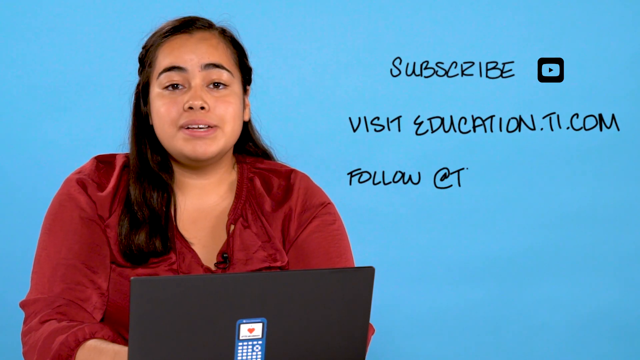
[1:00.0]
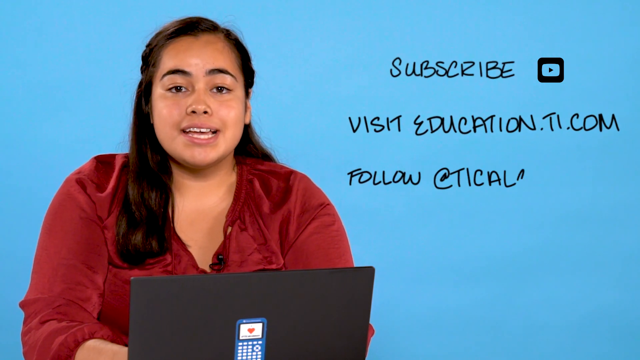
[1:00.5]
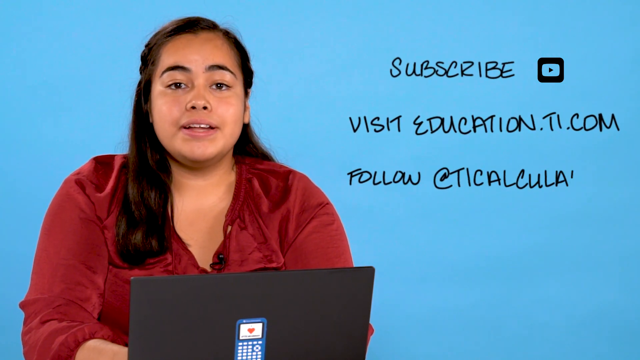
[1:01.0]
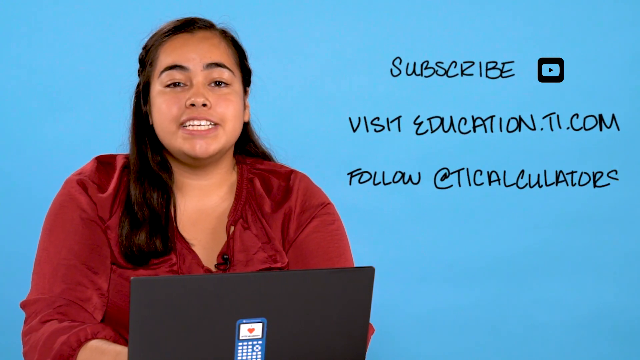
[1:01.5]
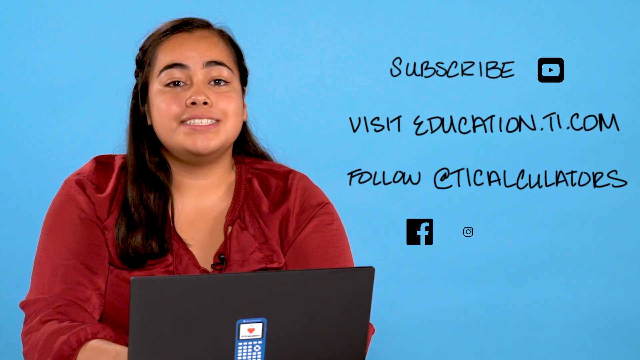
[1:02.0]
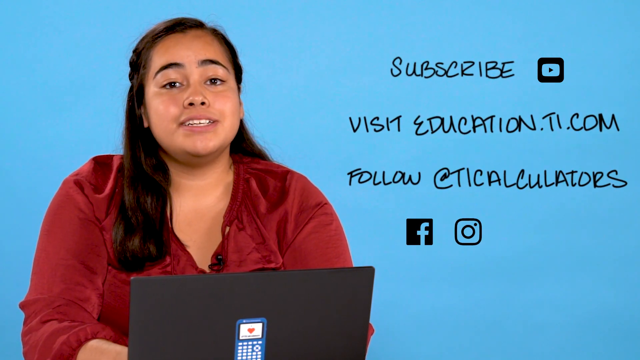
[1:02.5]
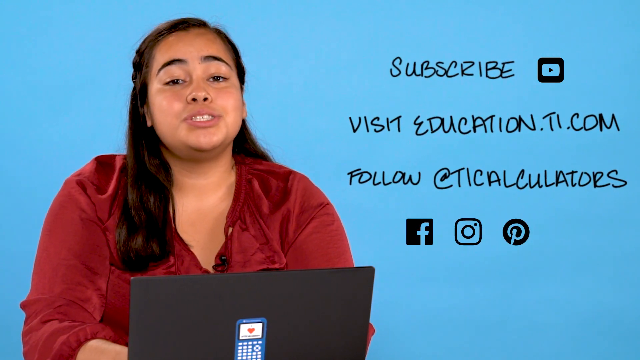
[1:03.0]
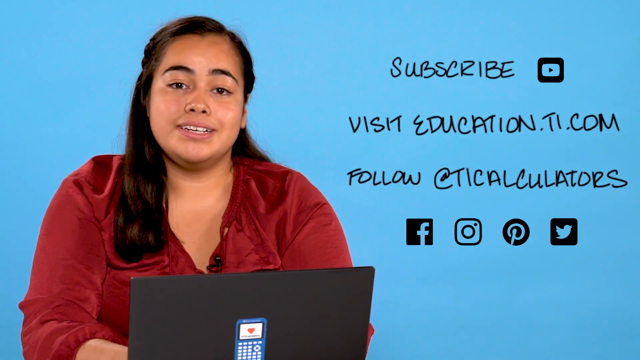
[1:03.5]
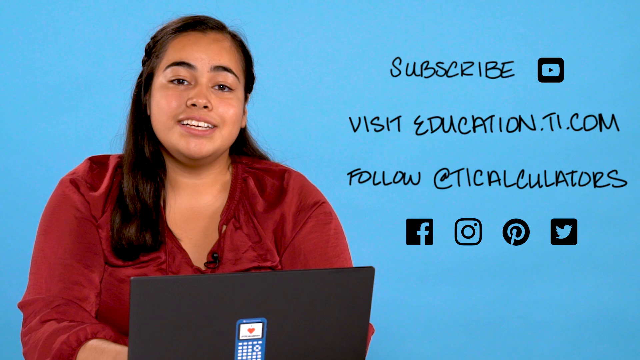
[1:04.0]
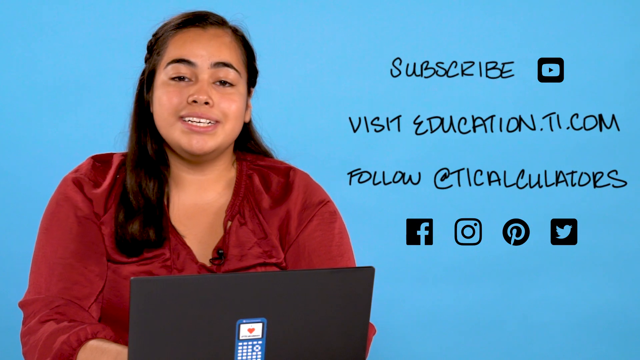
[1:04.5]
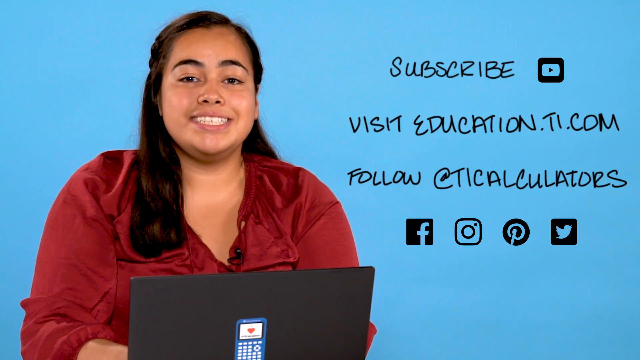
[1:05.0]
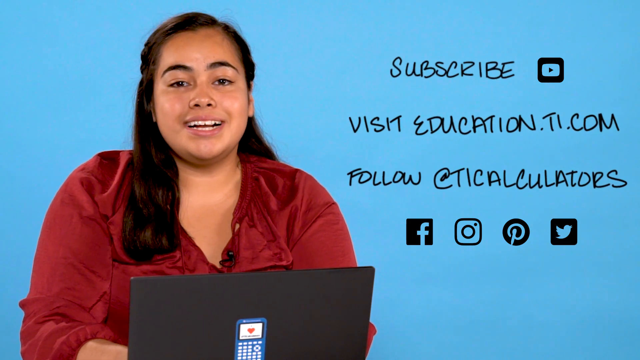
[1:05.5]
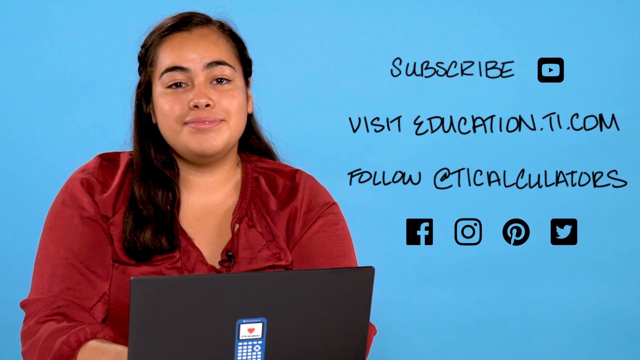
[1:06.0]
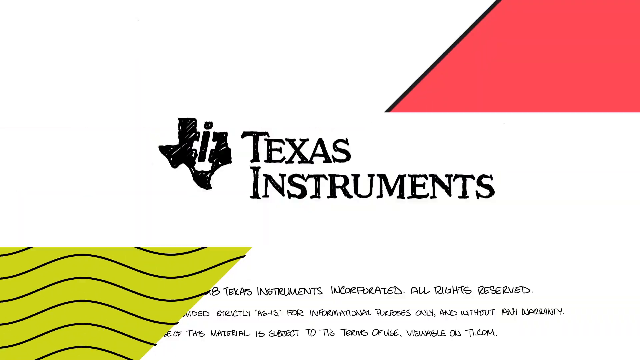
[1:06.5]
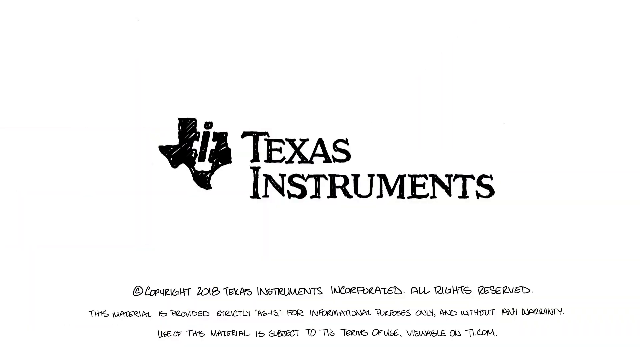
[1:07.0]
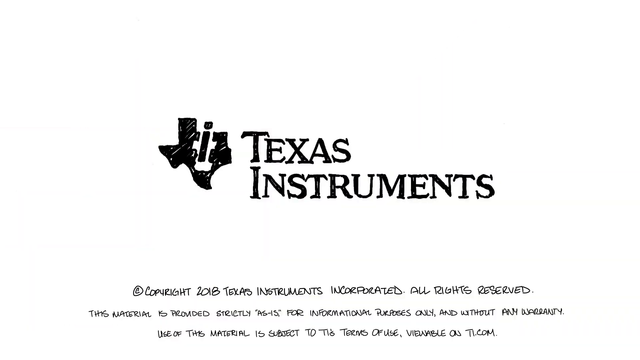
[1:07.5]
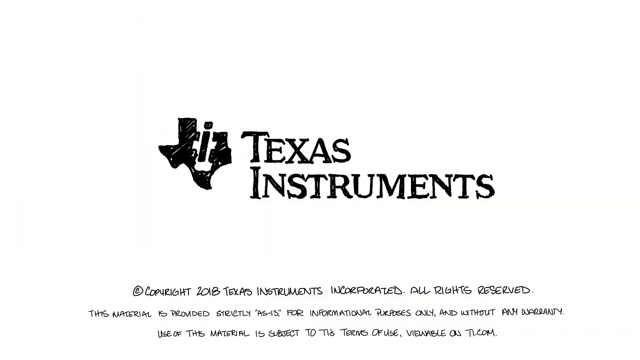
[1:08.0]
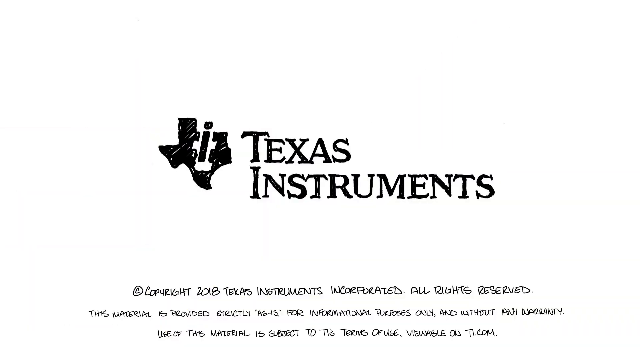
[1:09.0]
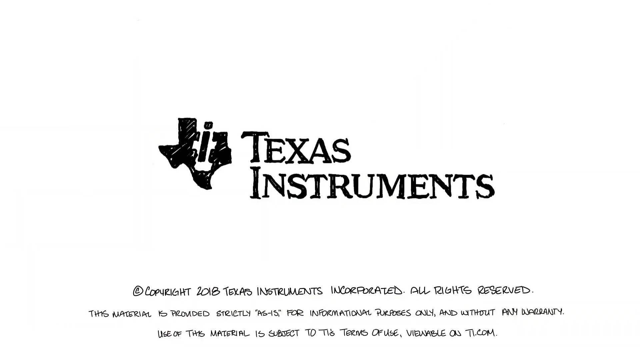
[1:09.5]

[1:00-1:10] A smiling woman who is in her early 30s, with brown hair and a light complexion, seems sweet. On-screen text reads "find the derivative of a specific point." In front of her are her laptop and her calculator, with her notebook on the side, on top of a table. The scene then changes to calculations that include a black-and-white graph with a white background and a visible blue line. The calculations cover the value, zero, minimum, maximum and intersect. She asks people to subscribe by visiting the website and to follow her on all social media platforms.